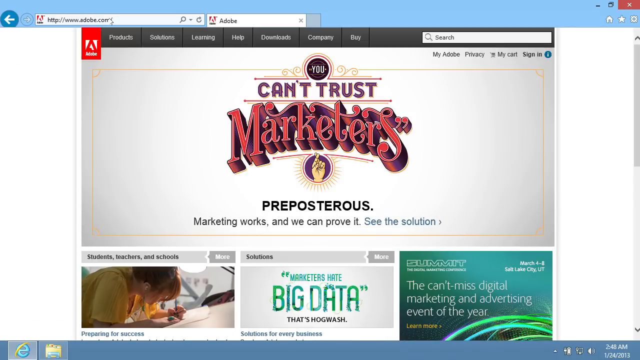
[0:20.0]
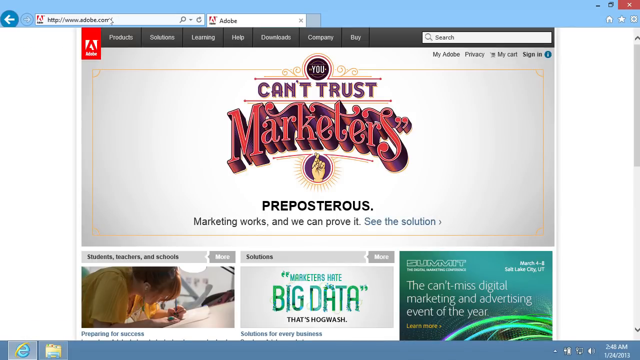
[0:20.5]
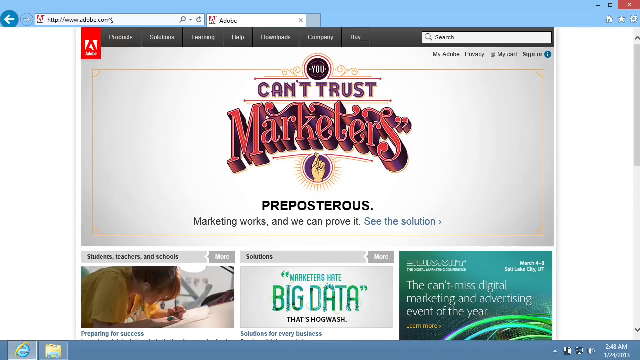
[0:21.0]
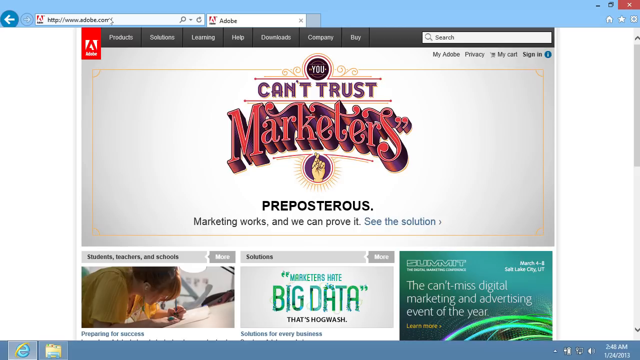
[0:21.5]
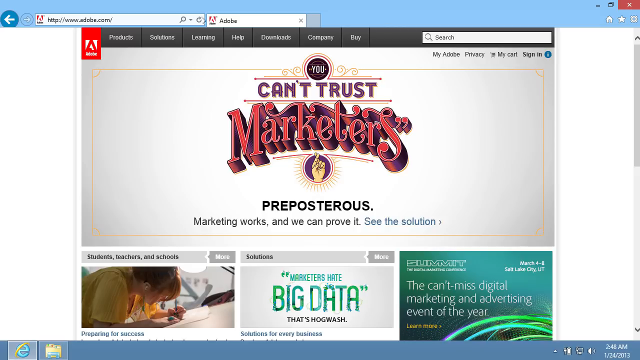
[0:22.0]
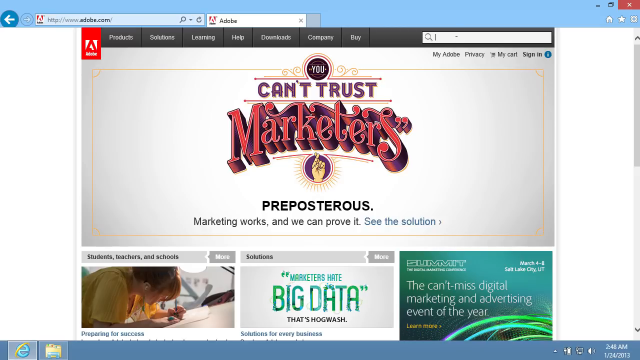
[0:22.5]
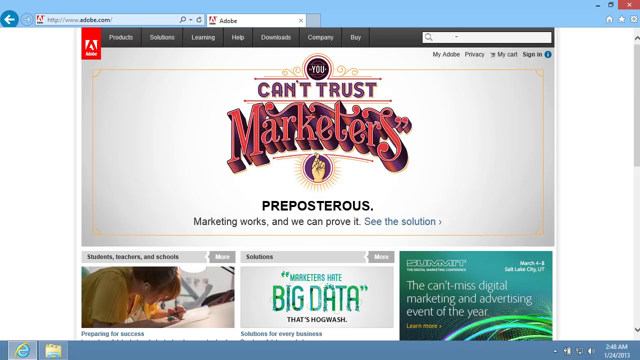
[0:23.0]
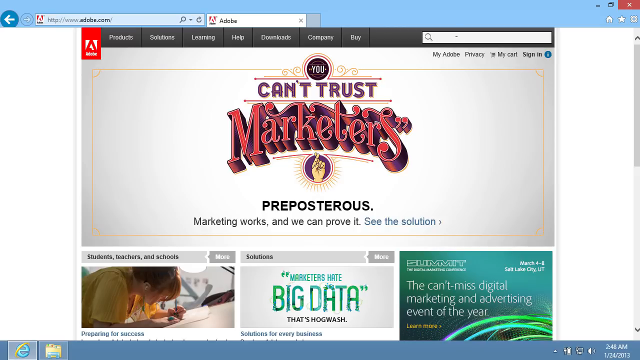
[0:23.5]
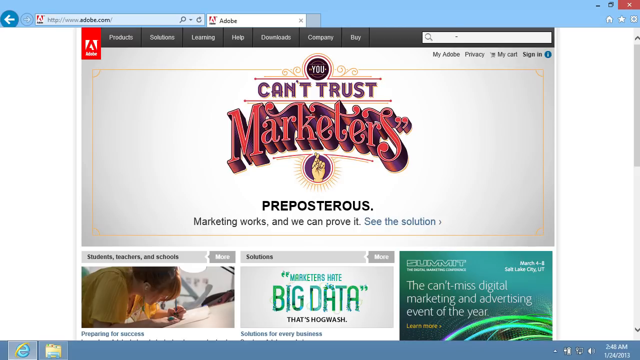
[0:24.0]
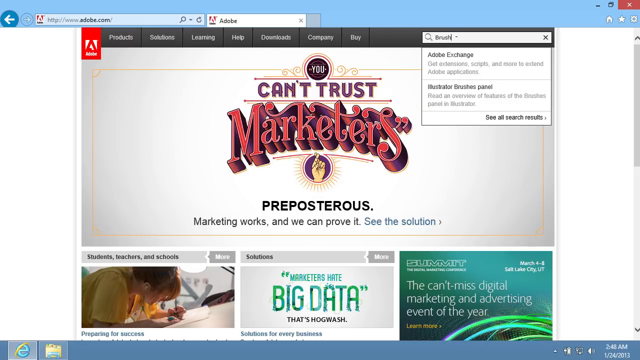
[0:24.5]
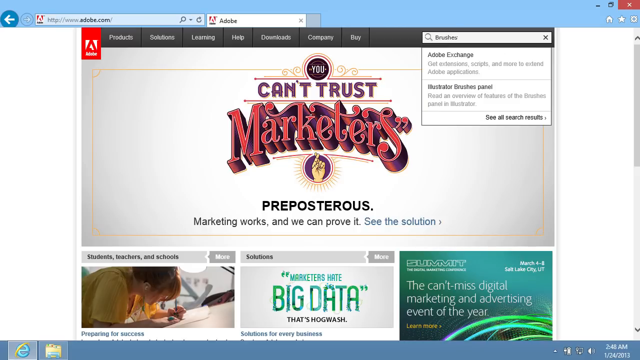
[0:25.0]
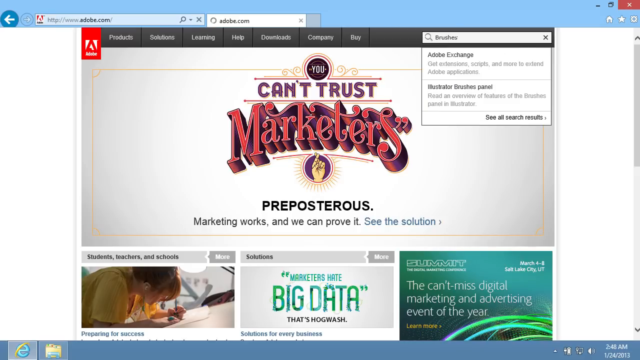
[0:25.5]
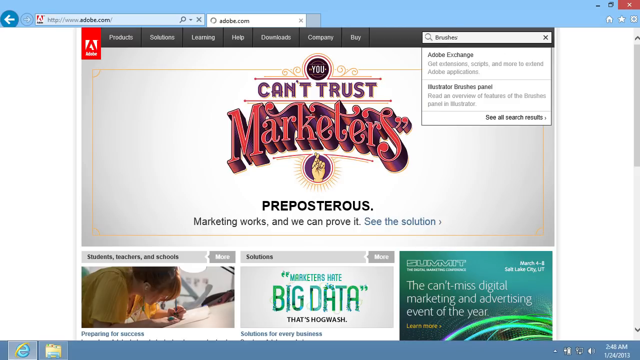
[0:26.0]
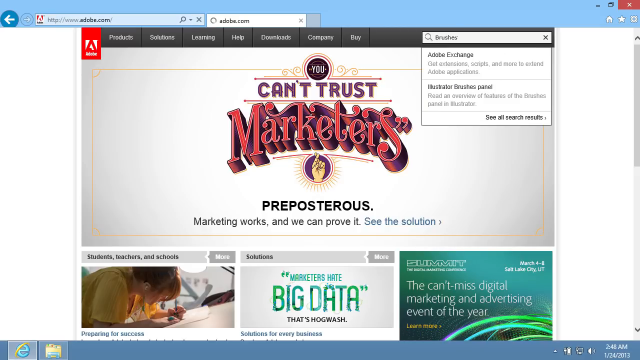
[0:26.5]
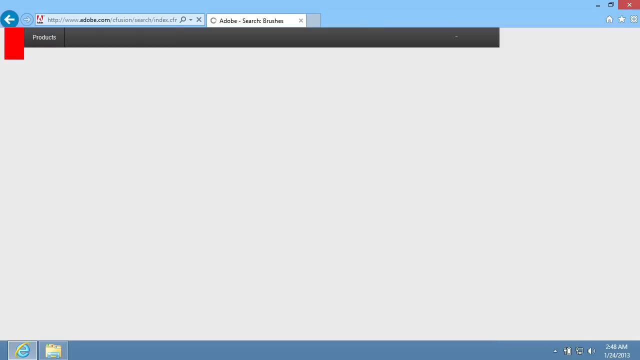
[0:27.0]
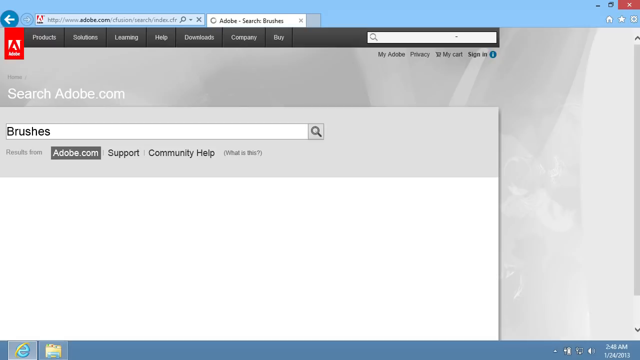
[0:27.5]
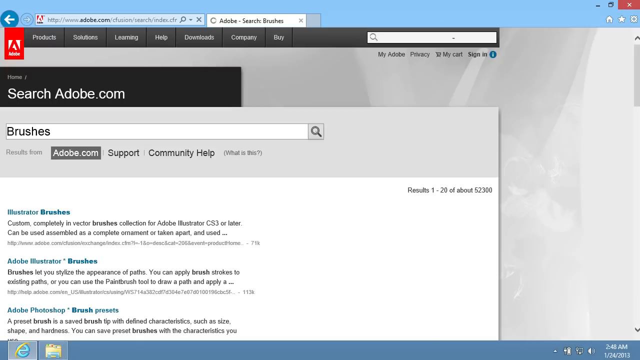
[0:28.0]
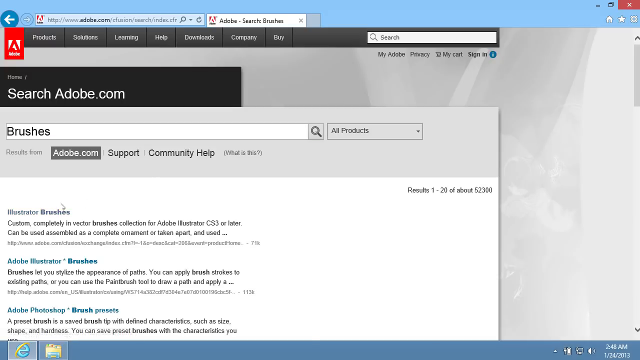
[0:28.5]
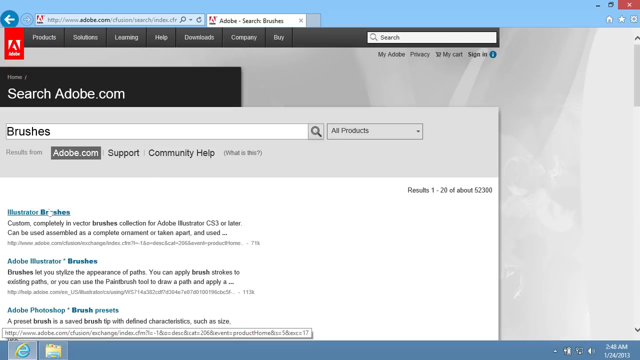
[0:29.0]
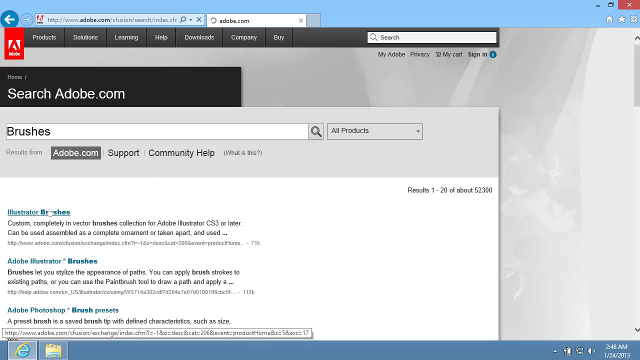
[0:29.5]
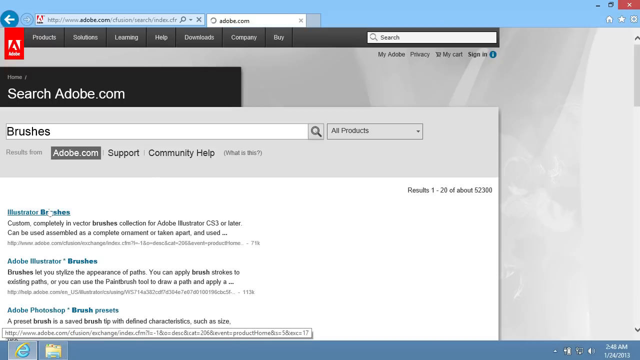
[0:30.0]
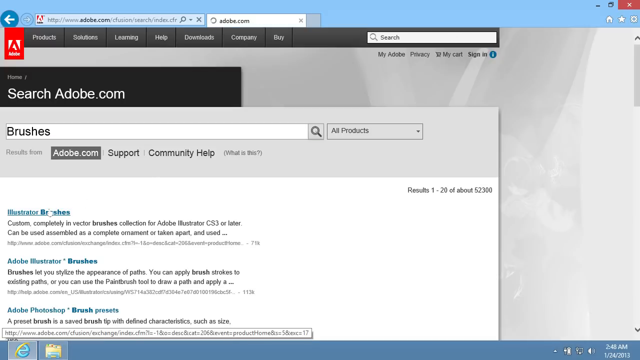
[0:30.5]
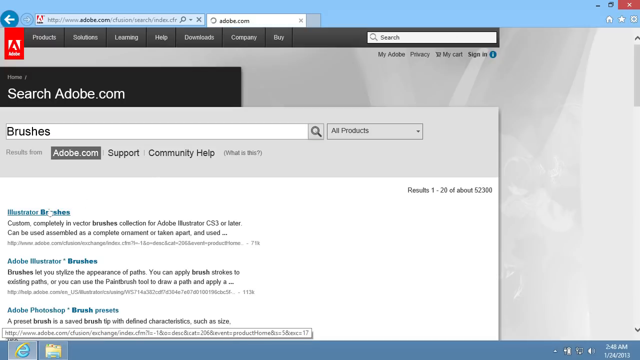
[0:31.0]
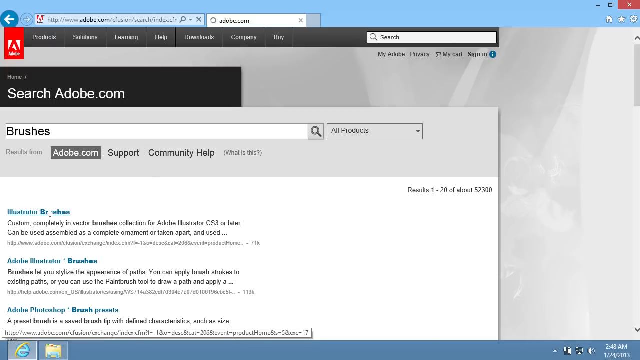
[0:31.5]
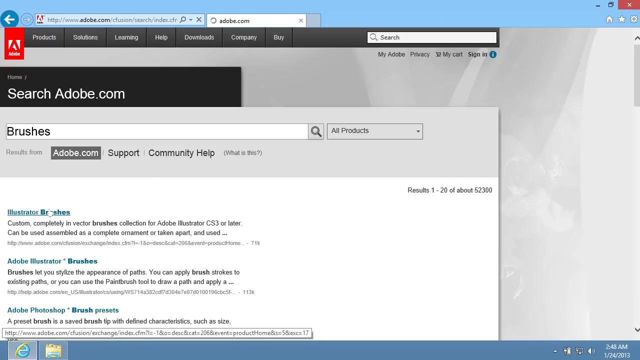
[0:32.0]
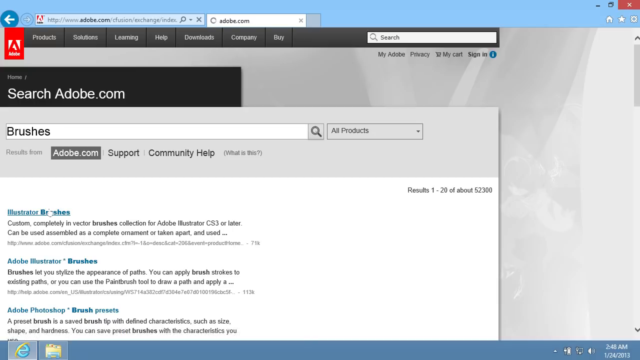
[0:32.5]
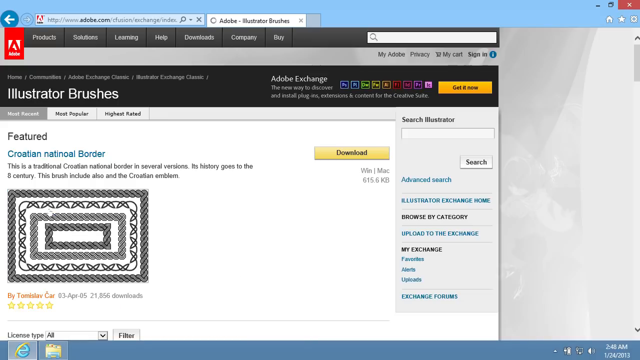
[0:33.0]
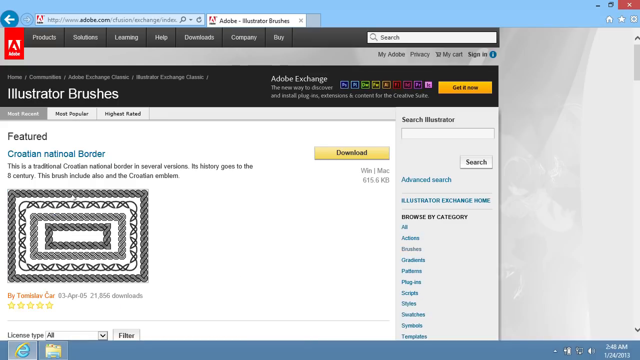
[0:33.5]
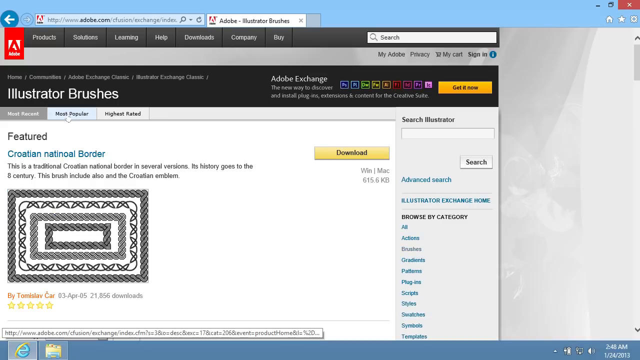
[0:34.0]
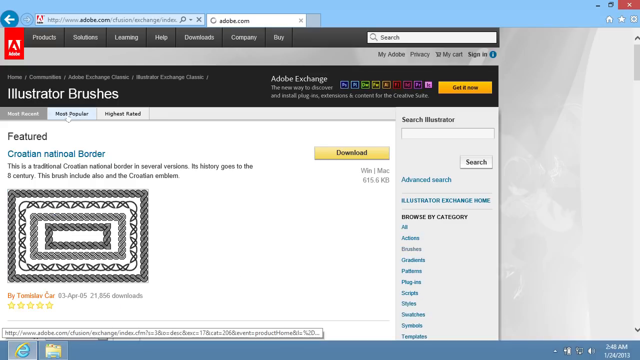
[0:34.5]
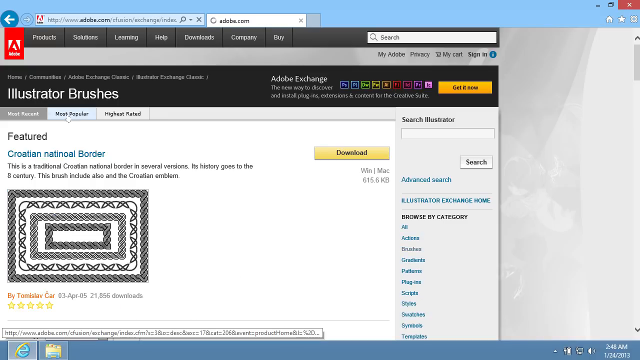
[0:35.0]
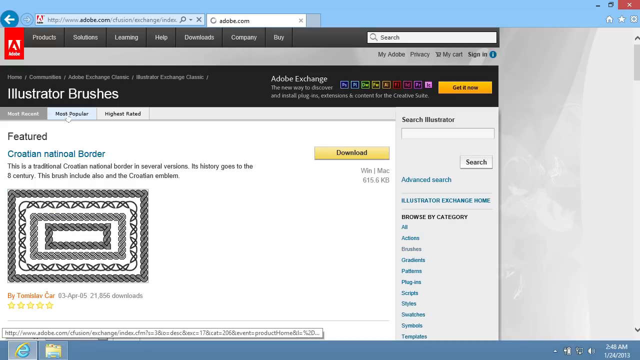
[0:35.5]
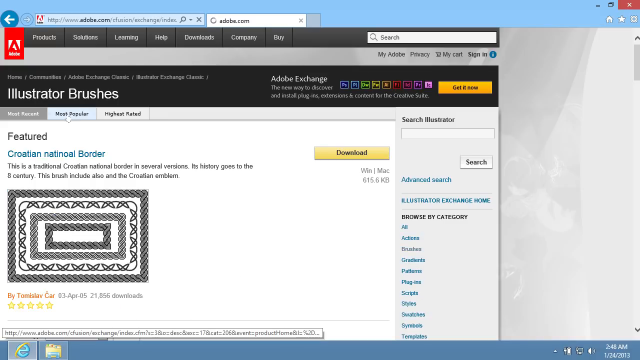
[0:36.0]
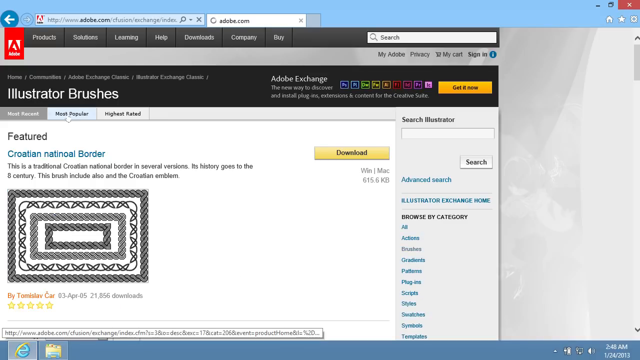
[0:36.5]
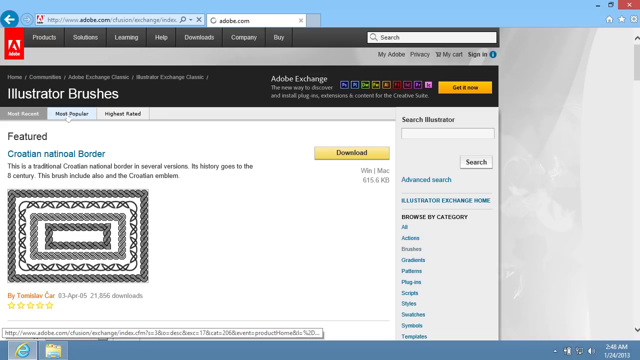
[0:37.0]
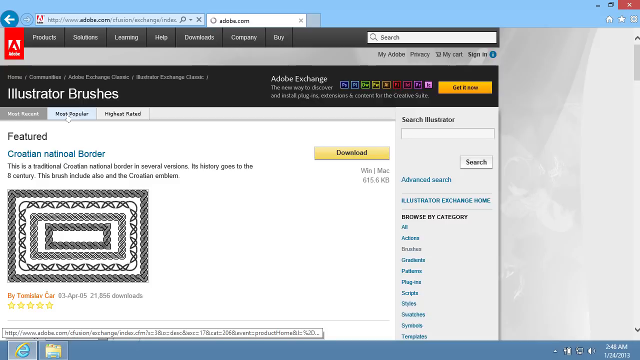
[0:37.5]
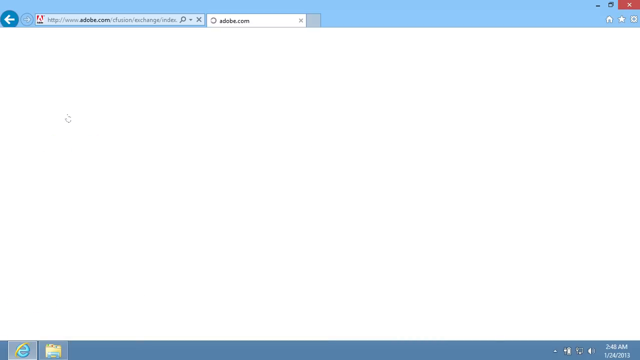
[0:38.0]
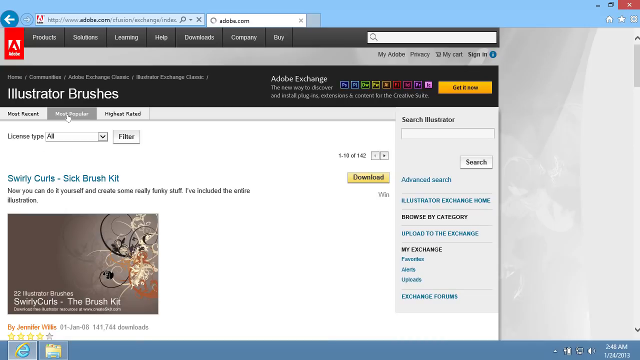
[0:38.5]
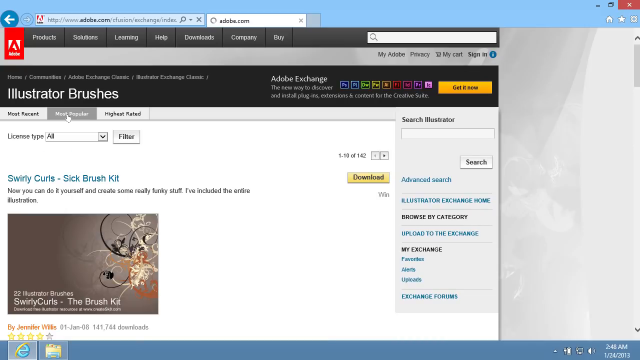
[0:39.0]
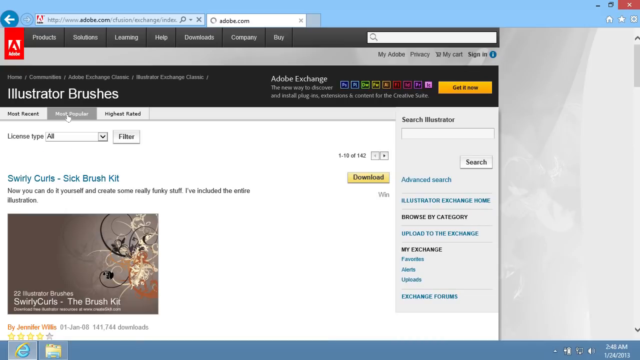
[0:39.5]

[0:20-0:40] The adobe.com page shows a number of different videos or pictures that lead to other areas of the site. The one at the top says "you can't trust marketeers, preposterous", followed by items about digital marketing, advertising events and big data. The person uses a small search box in the top right-hand corner, typing something into it, which brings up a page on adobe.com where they search for the word "brushes". The resulting page apparently concerns the use of brushes in Adobe Illustrator.